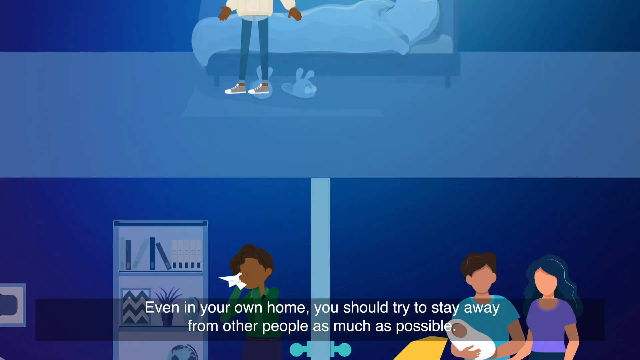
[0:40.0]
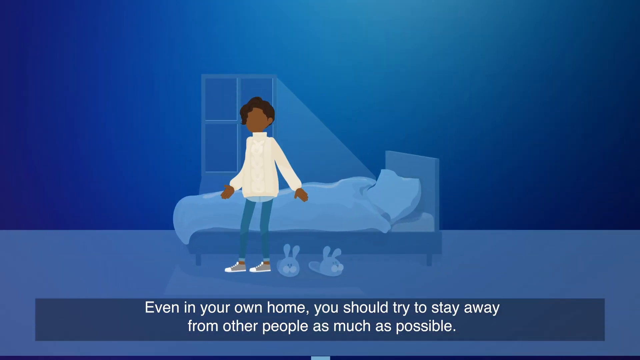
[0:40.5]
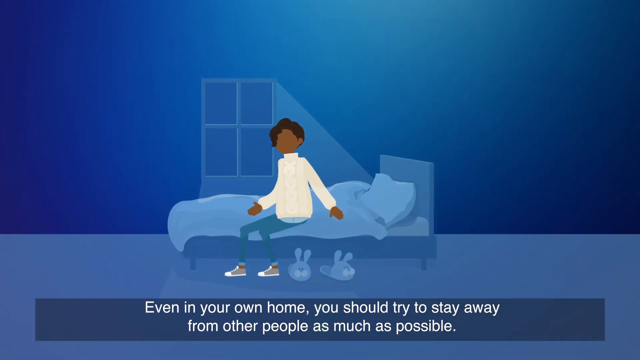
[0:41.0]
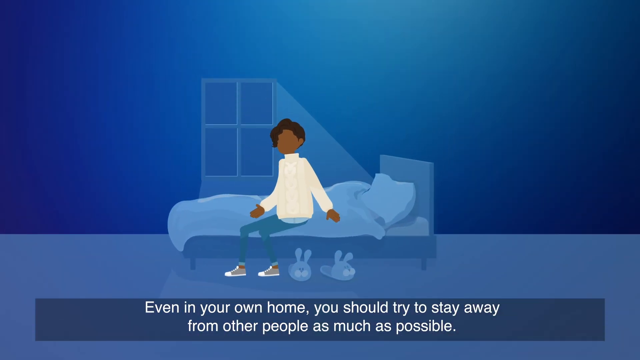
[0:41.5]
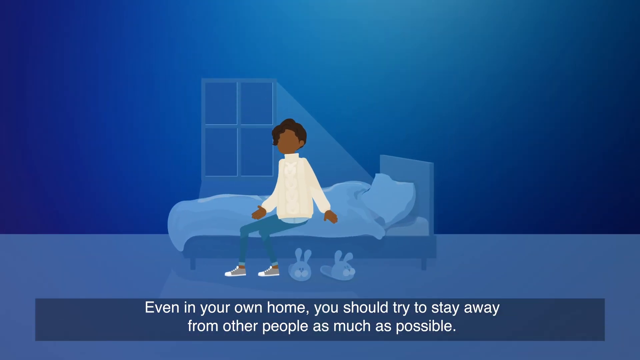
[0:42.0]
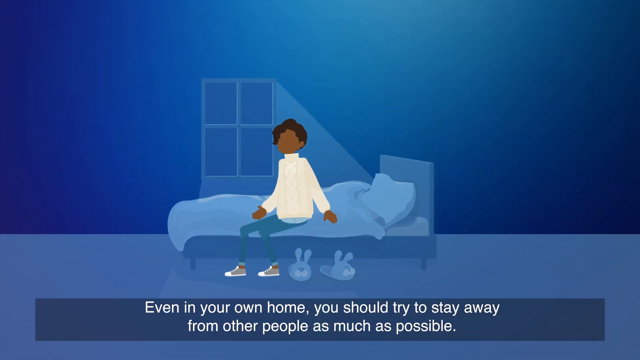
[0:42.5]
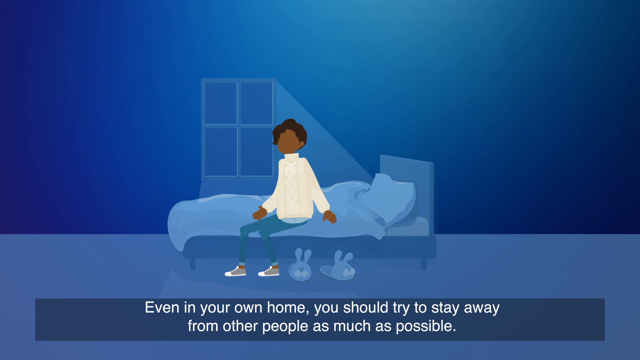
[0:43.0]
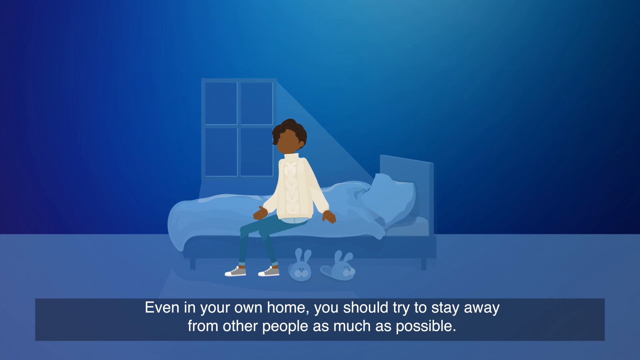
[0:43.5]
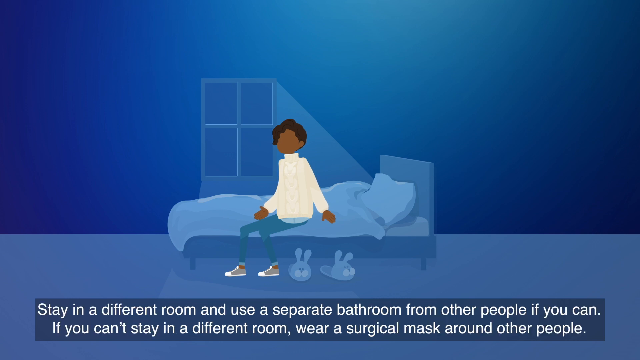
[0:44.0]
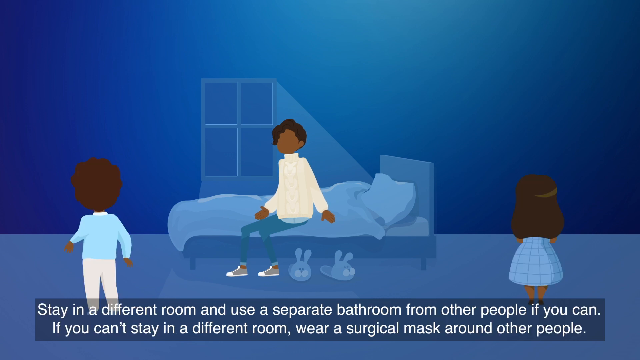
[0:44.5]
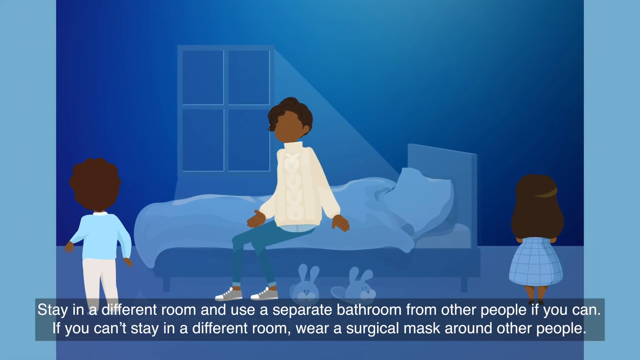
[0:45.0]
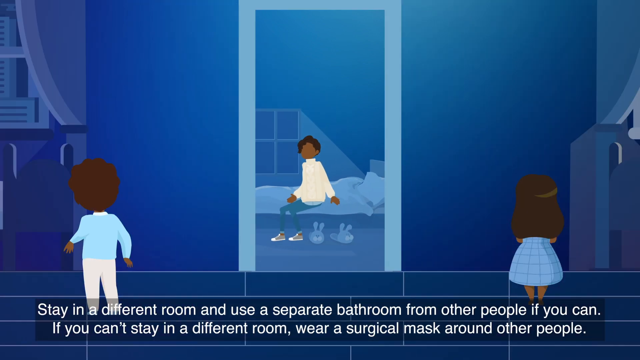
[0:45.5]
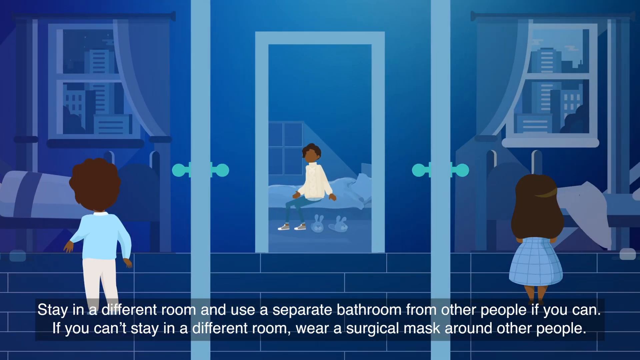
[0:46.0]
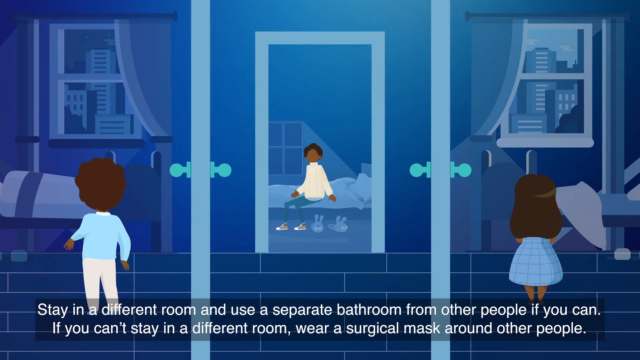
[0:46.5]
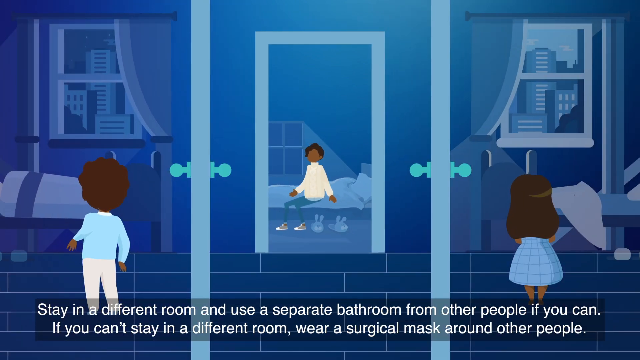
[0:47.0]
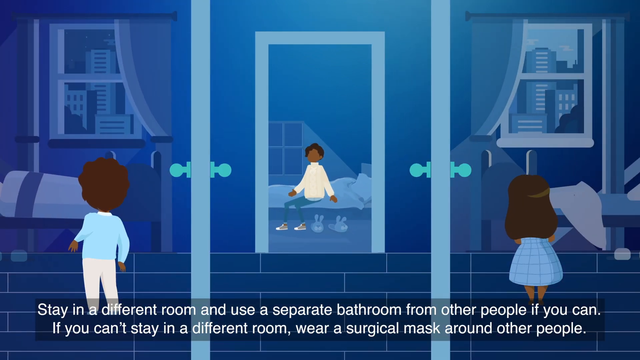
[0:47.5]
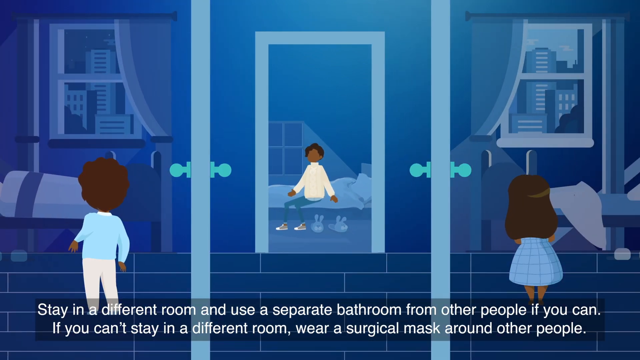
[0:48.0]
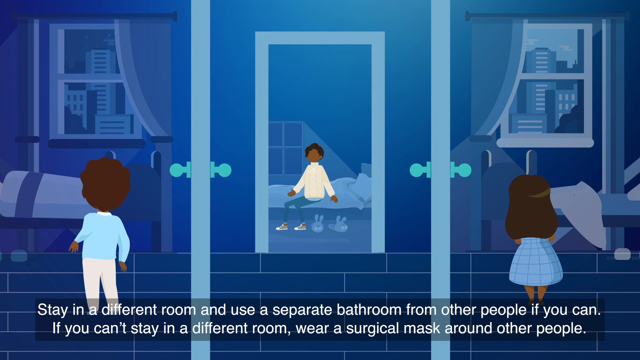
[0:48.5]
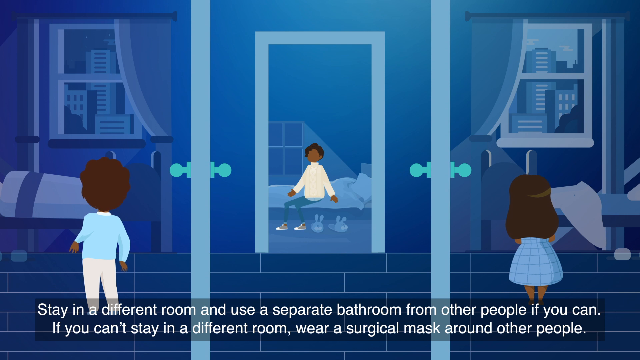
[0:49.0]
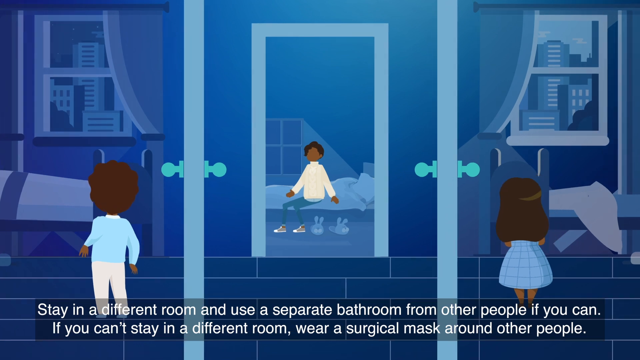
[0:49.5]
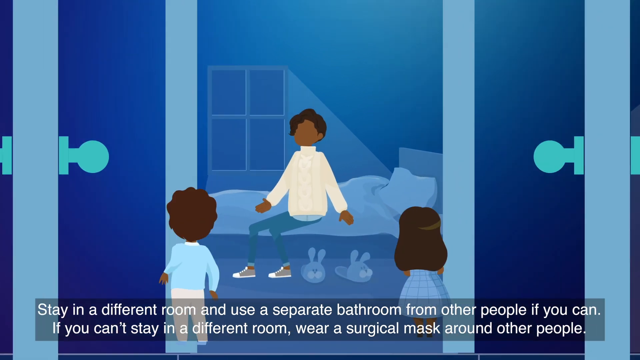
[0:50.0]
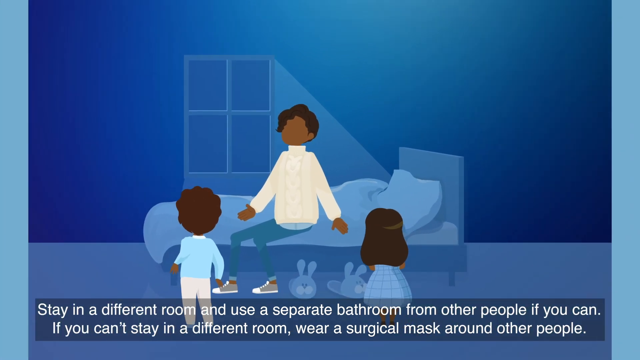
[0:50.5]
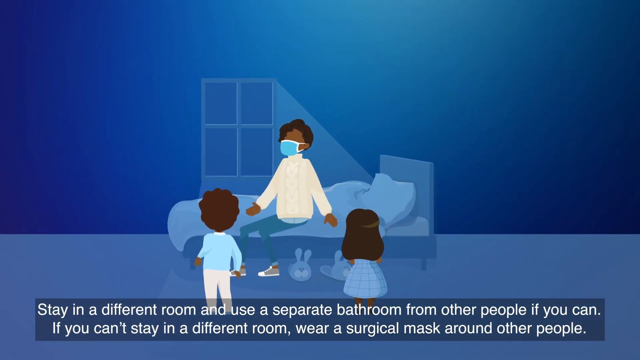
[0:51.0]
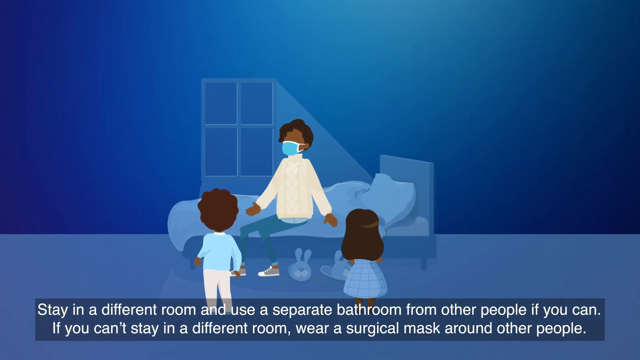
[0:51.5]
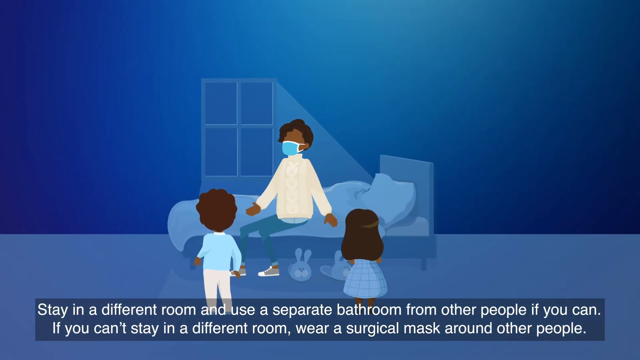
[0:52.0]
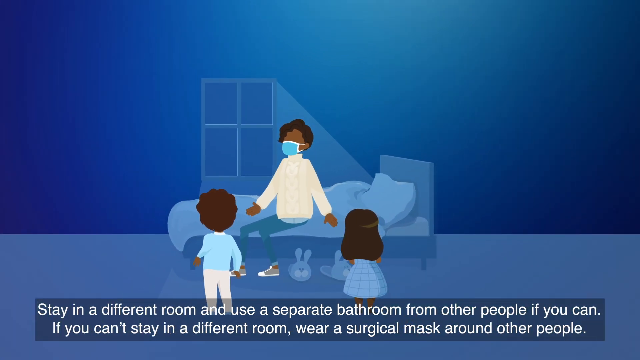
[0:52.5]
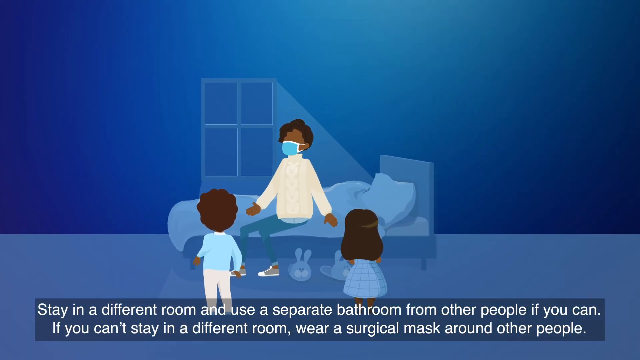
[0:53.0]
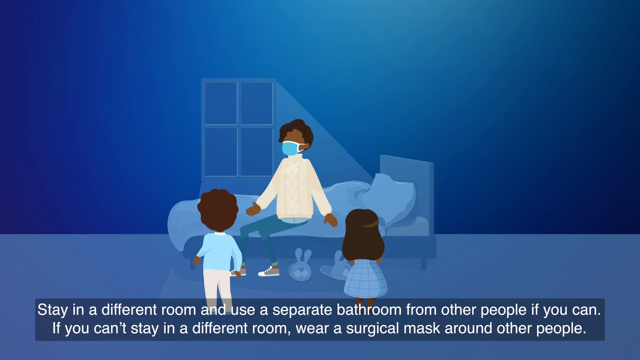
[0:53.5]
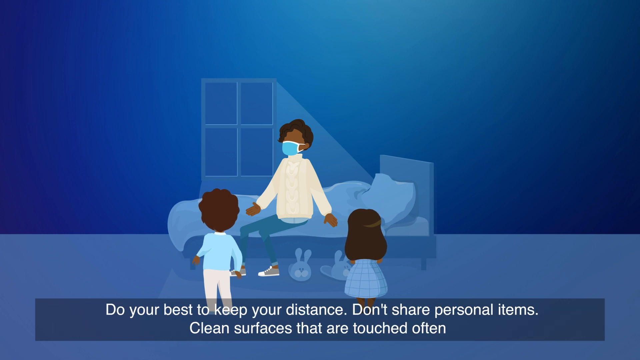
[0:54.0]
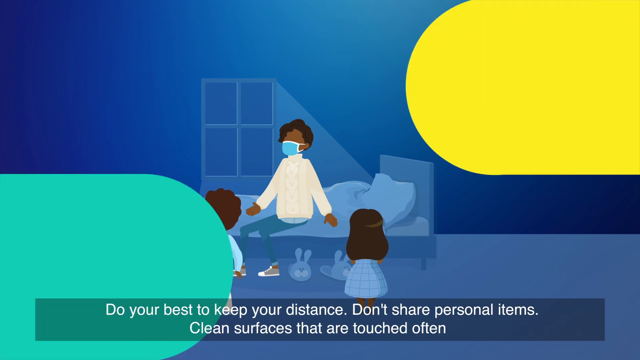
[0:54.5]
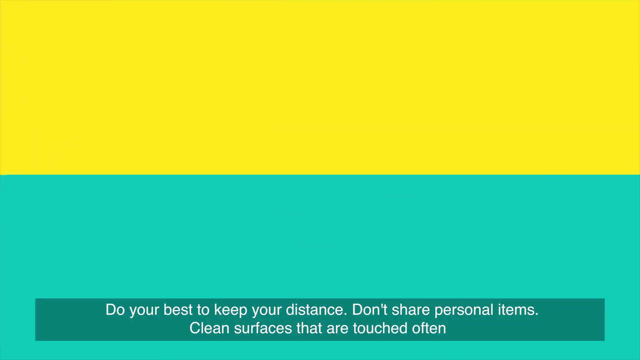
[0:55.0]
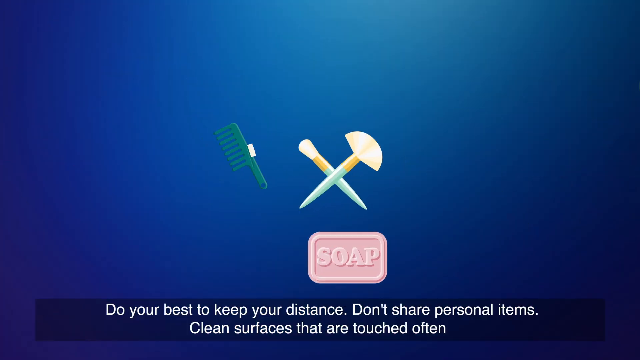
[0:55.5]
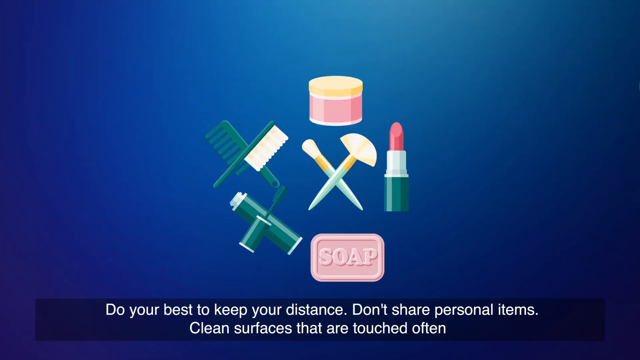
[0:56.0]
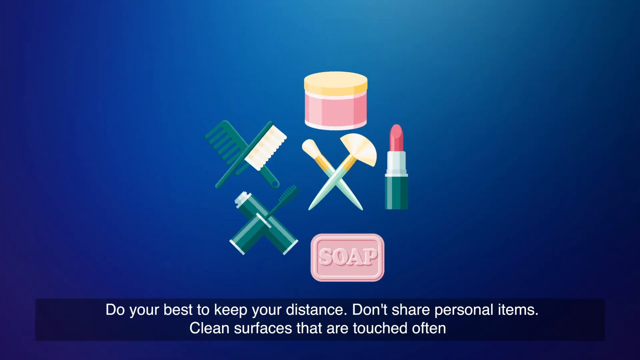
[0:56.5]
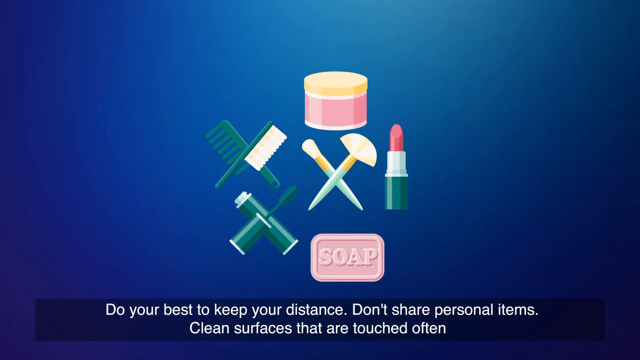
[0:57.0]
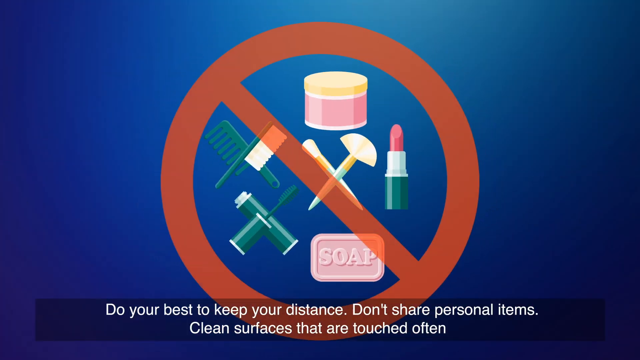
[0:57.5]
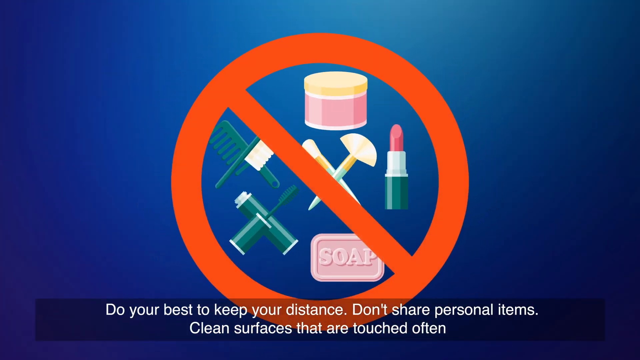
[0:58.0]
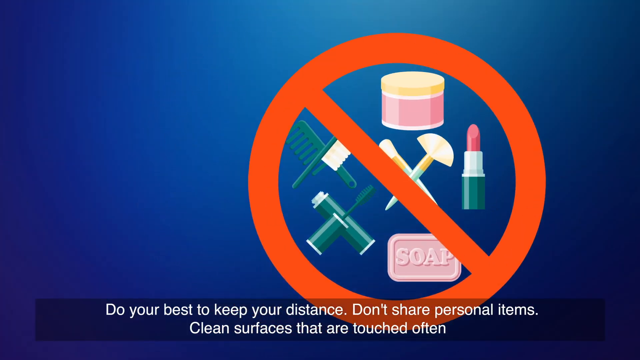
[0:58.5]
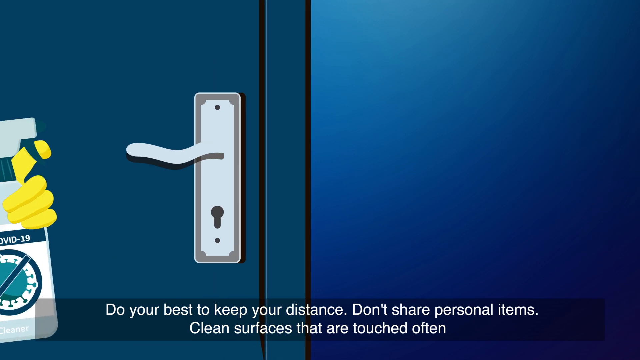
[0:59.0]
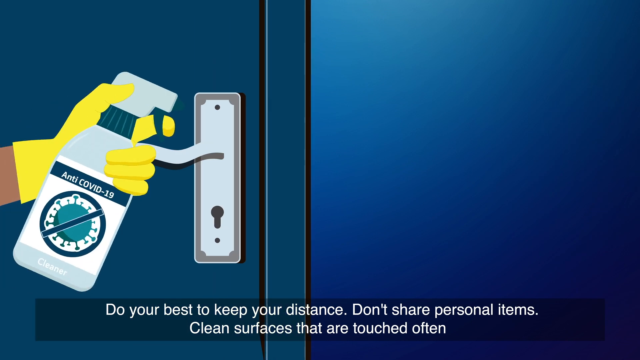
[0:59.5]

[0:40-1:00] A drawing of a woman appears; she looks like she is in her bedroom. She is an African-American woman with no face and short brown hair, wearing a white sweater. She sits down on the bed, facing the left side of the screen, with her hands touching the bed. The head of the bed is towards the right of the screen, and the bed has a white pillow and a white blanket. In the background is a window with what looks like moonlight coming through it. Underneath the bed are two slippers that look like bunnies. At the bottom of the screen, text reads "even in your own home, you should try to stay away from other people as much as possible." Then other people are shown in their own homes, facing the windows so their backs and the beds in front of them are visible. They are kids wearing pajamas. The view zooms in, and they come into the woman's room, and a mask appears on the woman's face. A yellow line comes from the right side of the screen and a light green line comes from the left side, meeting in the middle to cover the screen. In the center of the screen, some things that look like tags appear, along with lipsticks, combs, different makeup items and a bar of soap. A red circle with a line appears around these things and crosses them out. The scene then goes to a door handle being sprayed with a disinfectant.